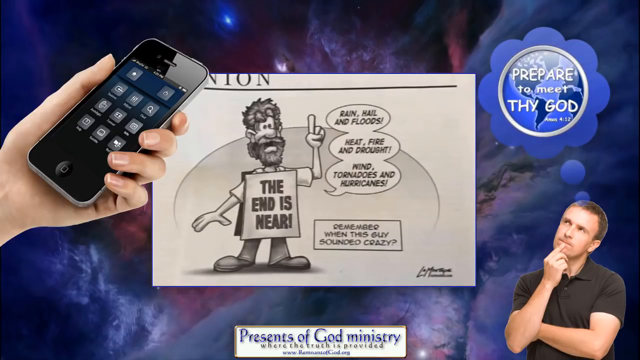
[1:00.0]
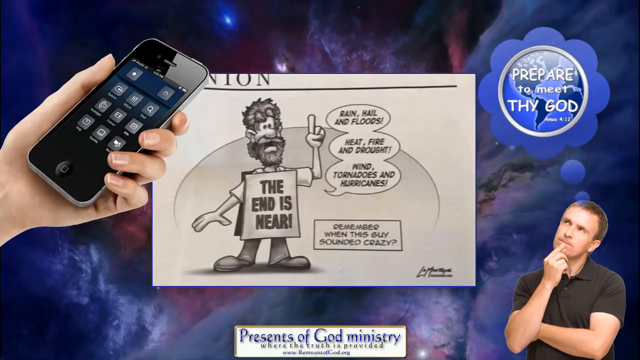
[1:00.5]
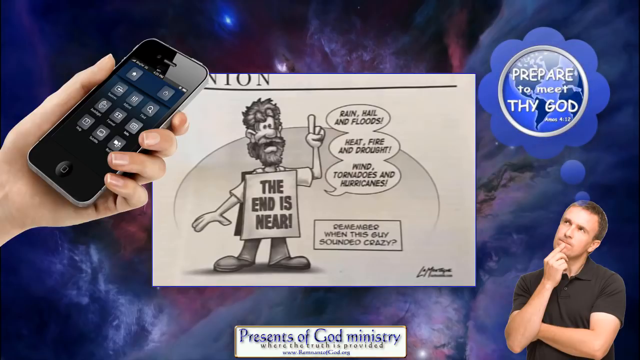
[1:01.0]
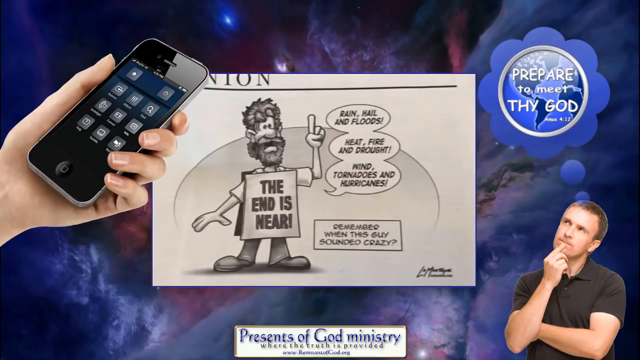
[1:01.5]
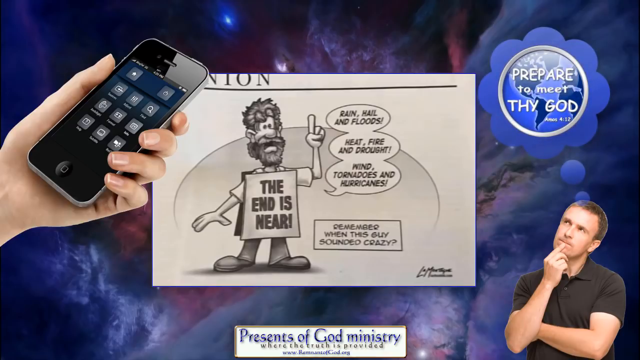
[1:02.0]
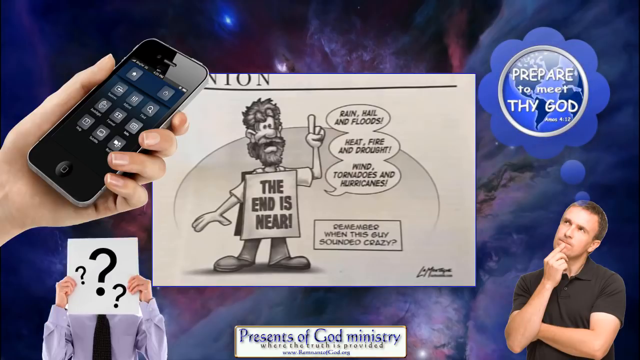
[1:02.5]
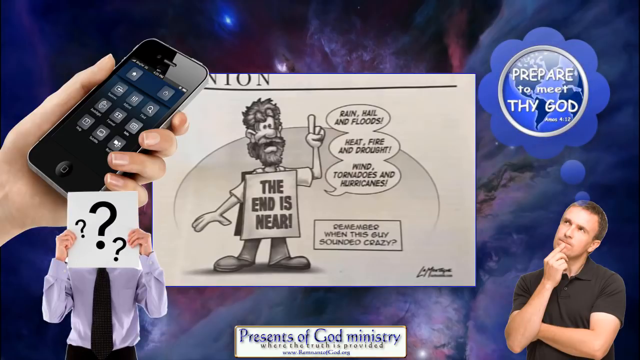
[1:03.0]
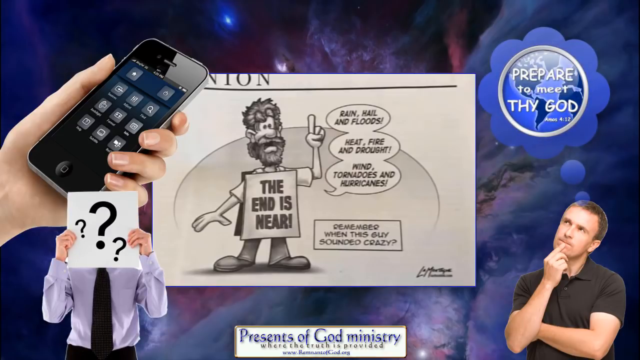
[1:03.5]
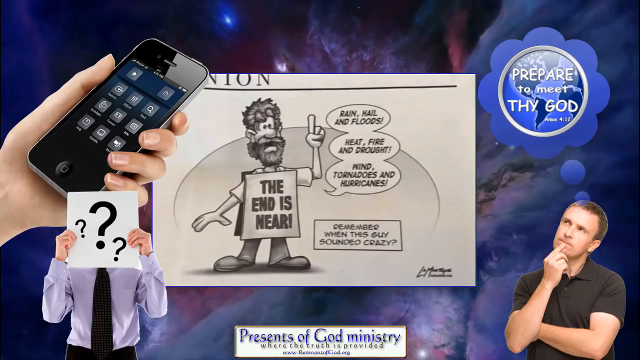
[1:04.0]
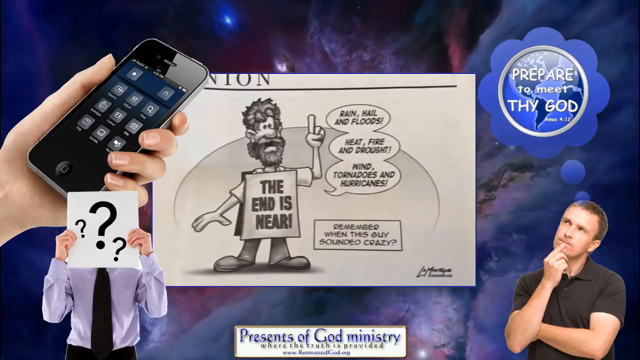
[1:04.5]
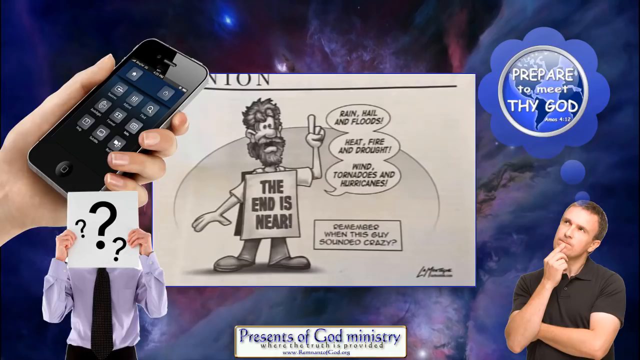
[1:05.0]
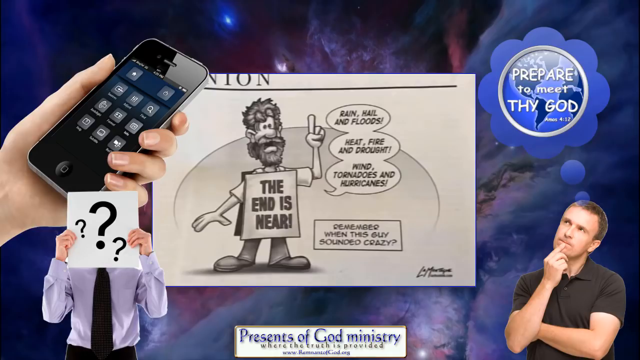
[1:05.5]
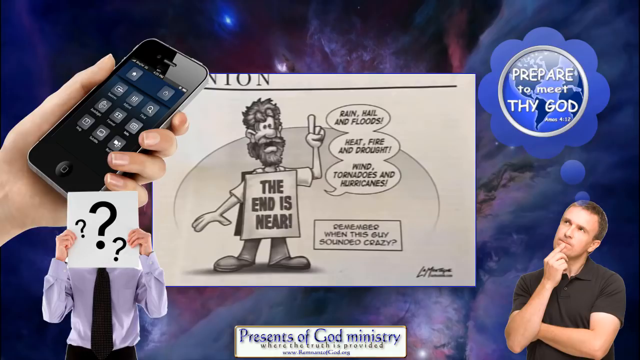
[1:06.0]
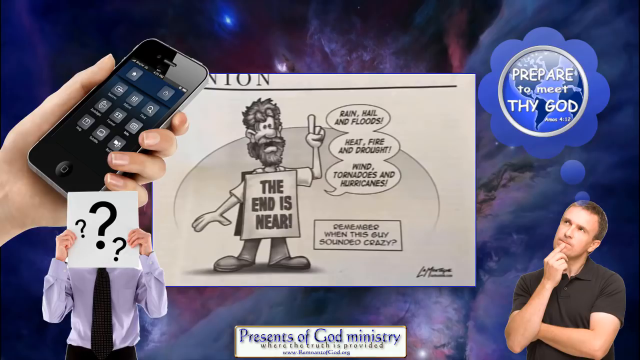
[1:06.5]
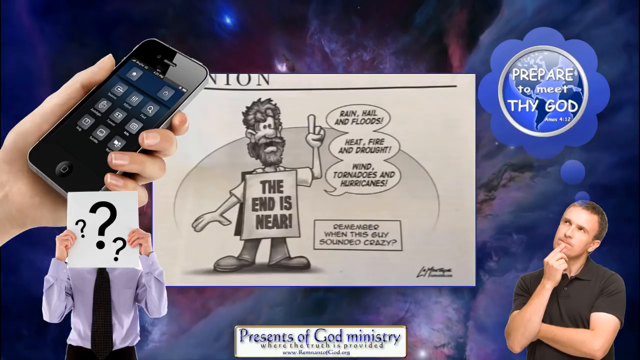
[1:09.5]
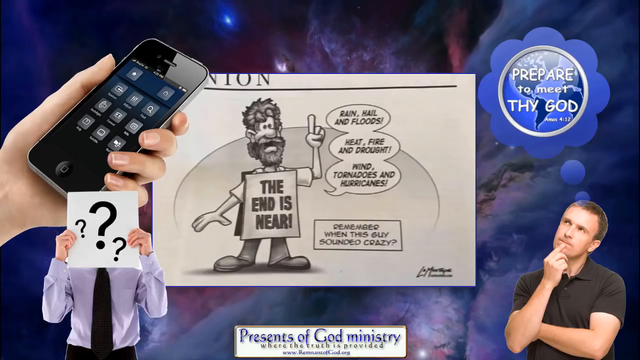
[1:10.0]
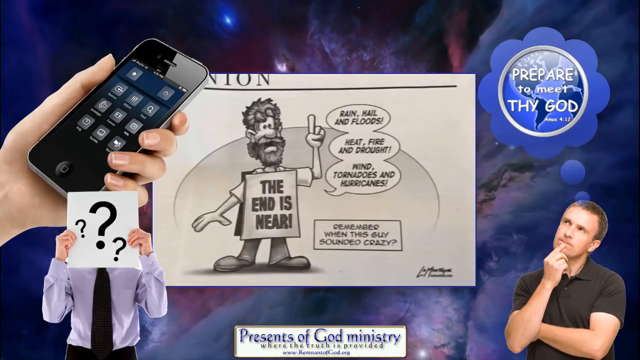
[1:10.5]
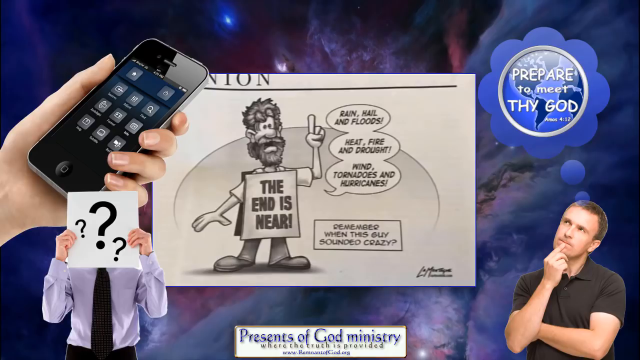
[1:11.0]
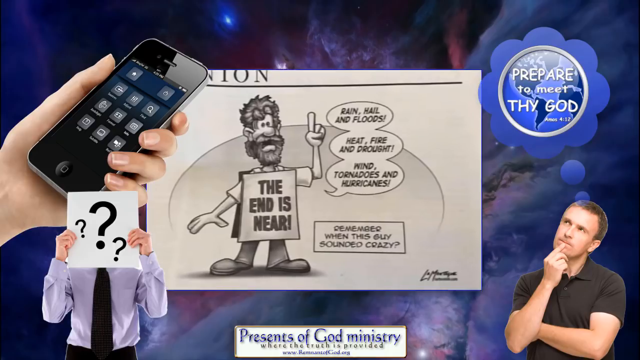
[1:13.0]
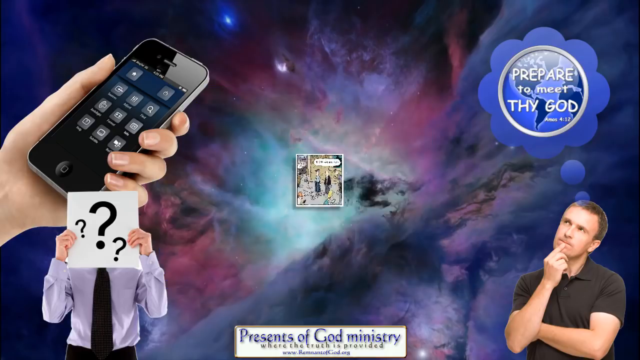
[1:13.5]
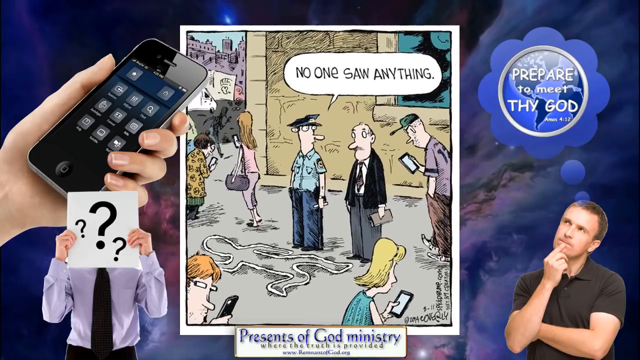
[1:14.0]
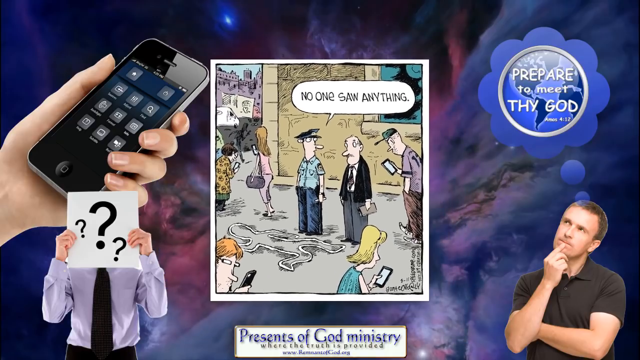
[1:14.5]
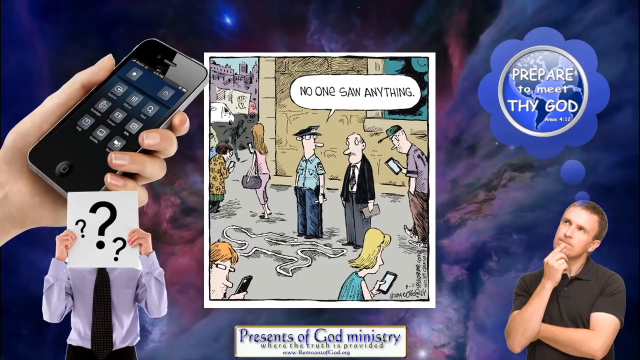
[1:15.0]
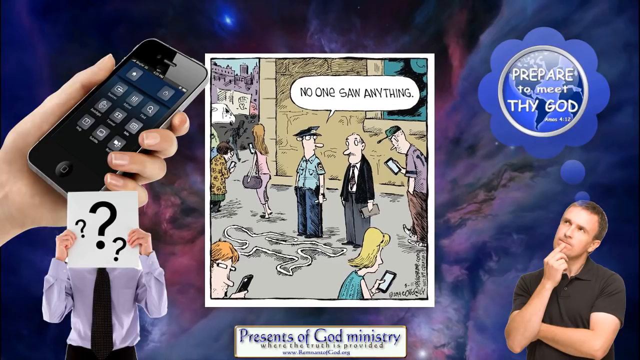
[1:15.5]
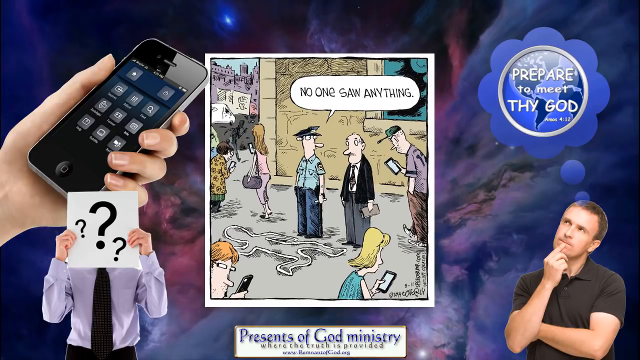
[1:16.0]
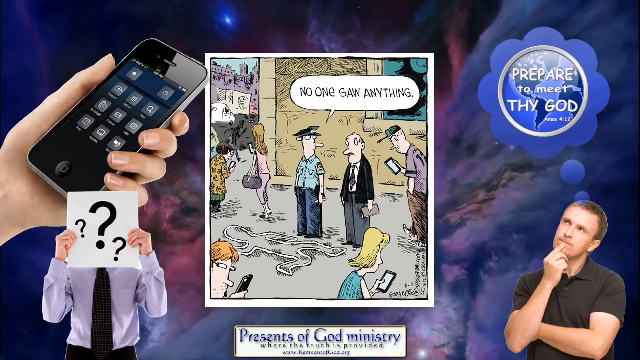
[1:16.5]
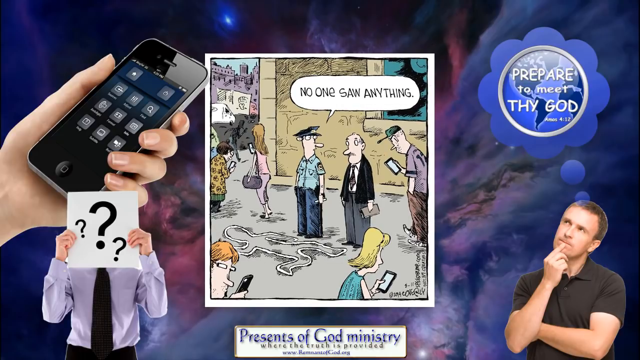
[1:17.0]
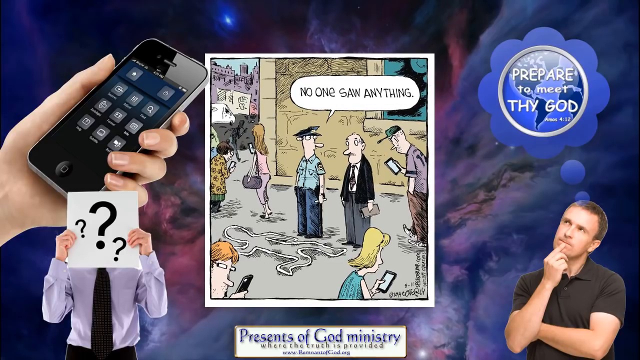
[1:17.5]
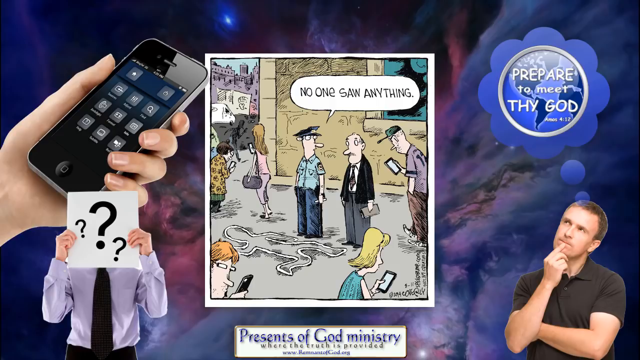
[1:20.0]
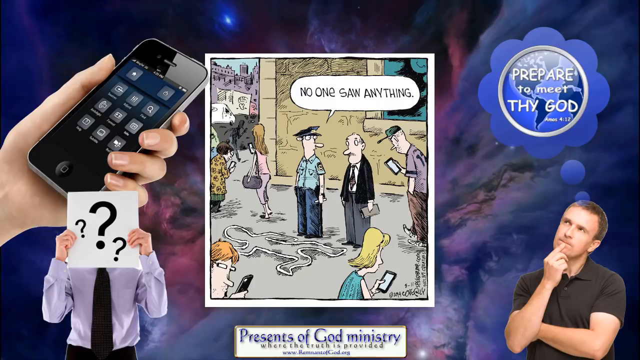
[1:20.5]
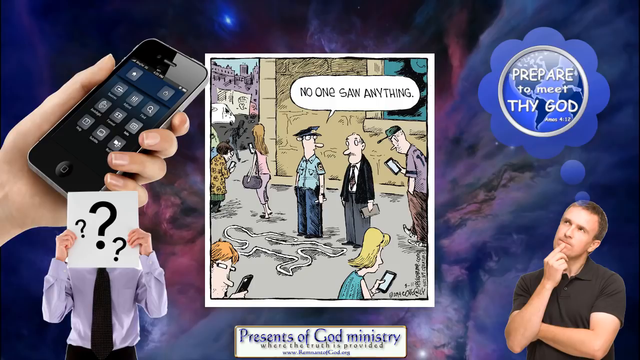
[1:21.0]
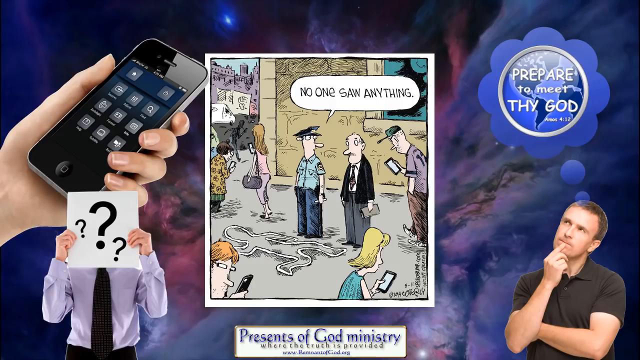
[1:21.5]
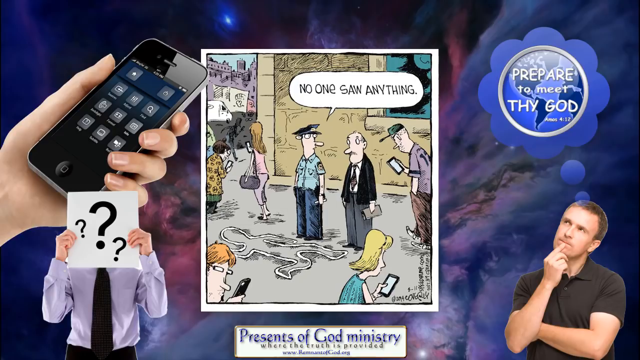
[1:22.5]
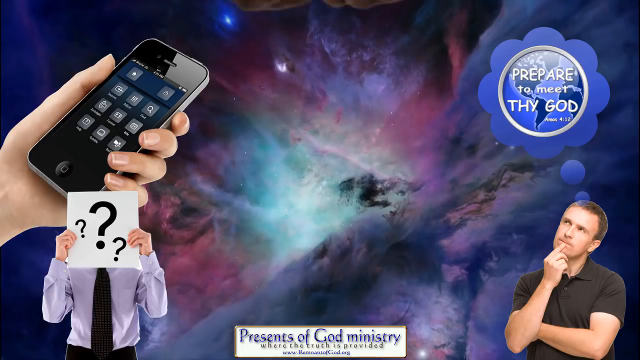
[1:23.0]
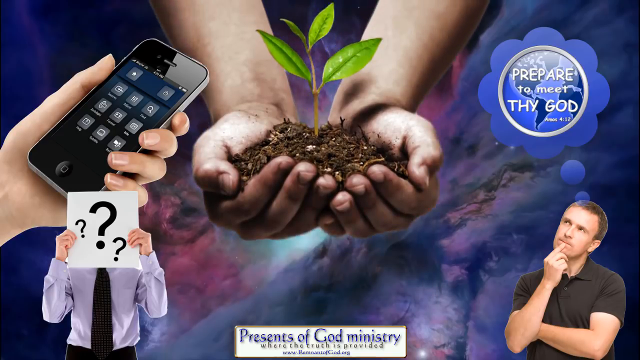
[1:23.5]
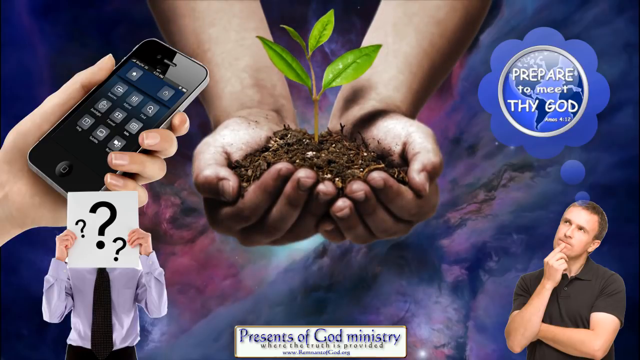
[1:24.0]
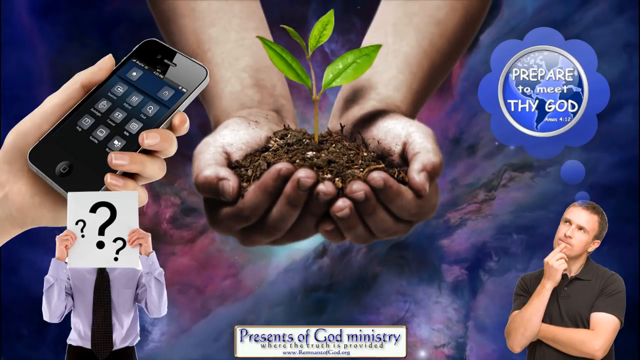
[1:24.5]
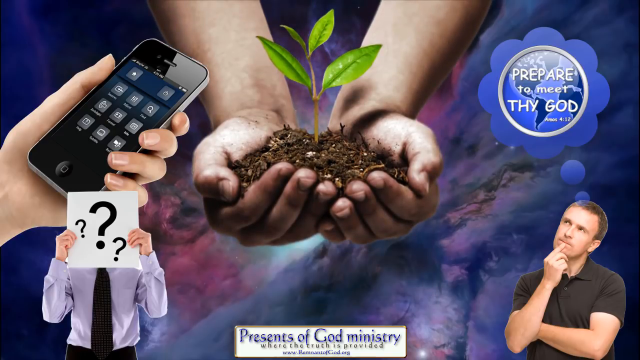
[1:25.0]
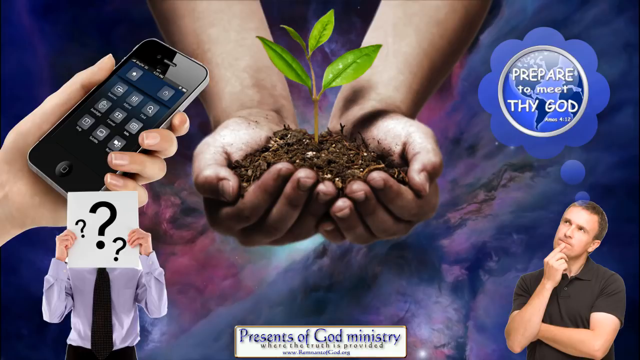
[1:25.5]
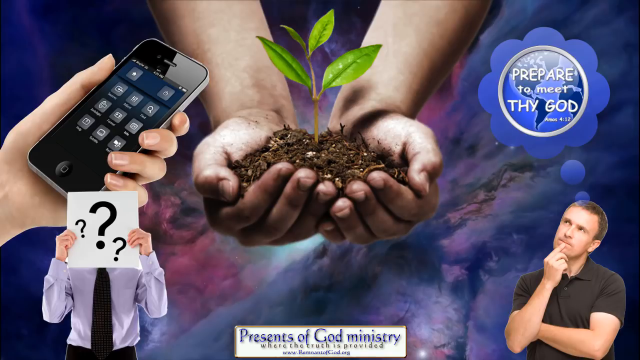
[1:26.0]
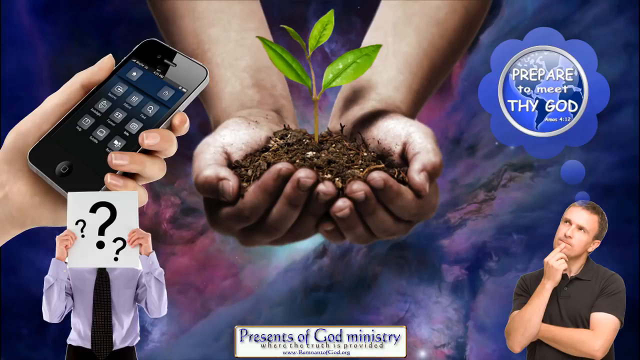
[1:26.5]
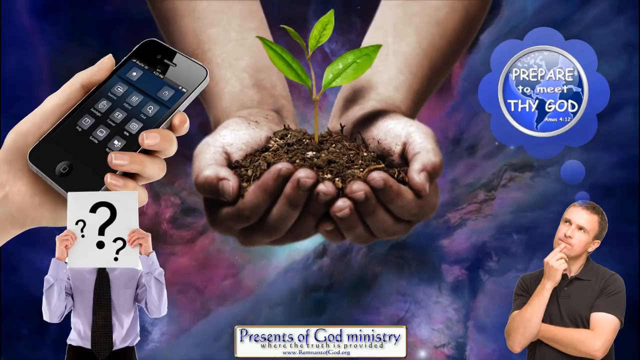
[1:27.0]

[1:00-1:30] The same white man looking upward with his hand to his chin remains, and one of his thought bubbles says "prepare to meet thy God". A pop-up then rises rather quickly from the bottom on the lower left: a person in a dress shirt, possibly light purple, with a dark tie, holding a sign right in front of his face with three black question marks on it. This stays for about five more seconds. The newspaper photograph then goes backwards into the space background, and a new cartoon comes forward. It appears to show a policeman saying in a speech bubble "no one saw anything", seemingly speaking to a person in a black suit to his right. He looks toward his right, where that person stands facing forward. Several other people in the city appear to be on their smartphones in this comic-book scene. After five to seven seconds it disappears back into the space background. Then, from the bottom, a photograph appears of what looks like a white man with cupped palms holding soil, with one small branch with four green leaves coming up, almost as if it was just planted and is beginning to grow in his palms. This stays on screen for about three to four seconds.